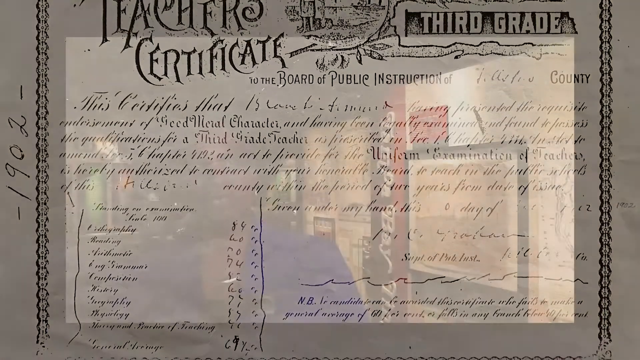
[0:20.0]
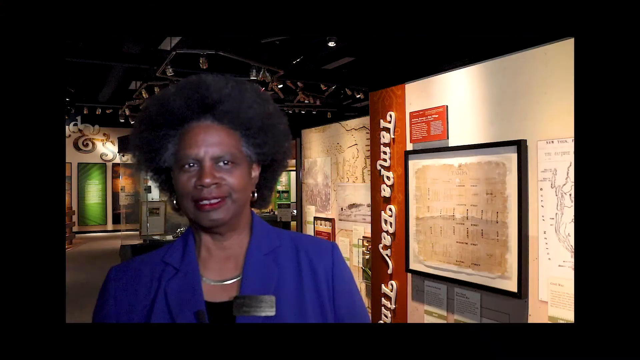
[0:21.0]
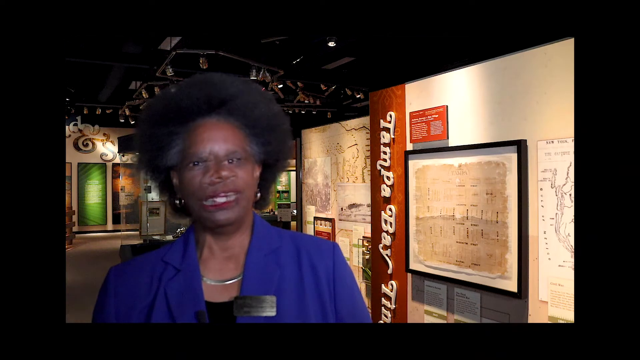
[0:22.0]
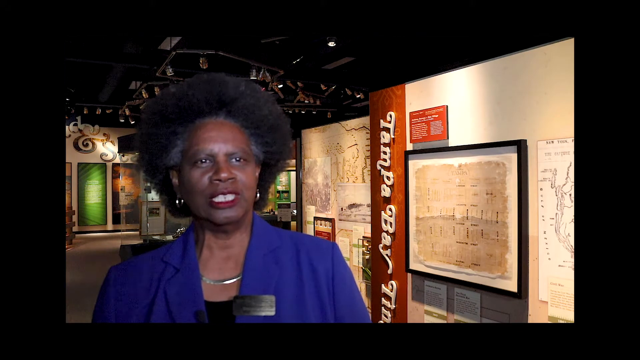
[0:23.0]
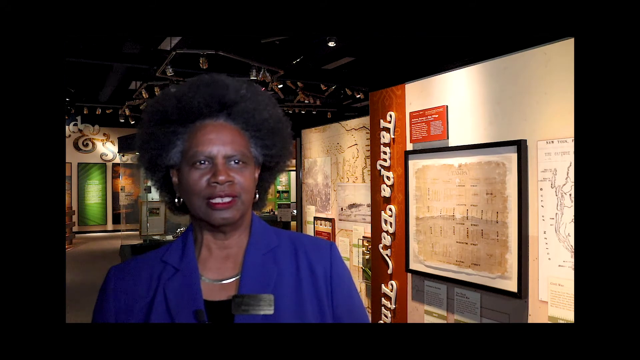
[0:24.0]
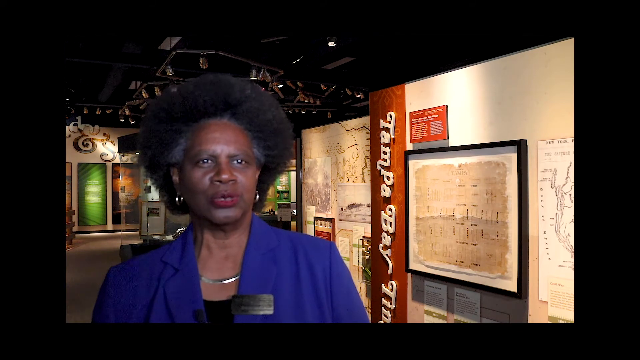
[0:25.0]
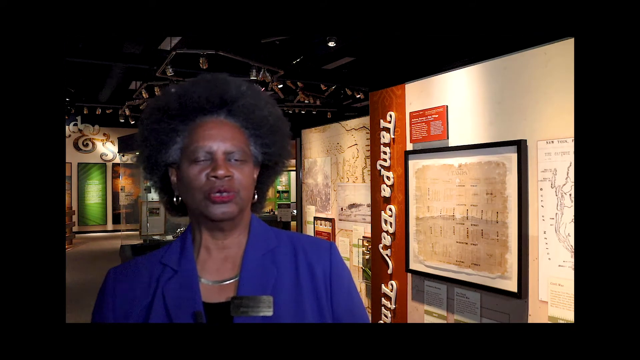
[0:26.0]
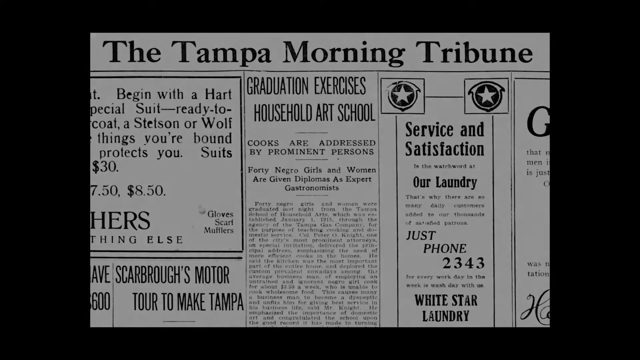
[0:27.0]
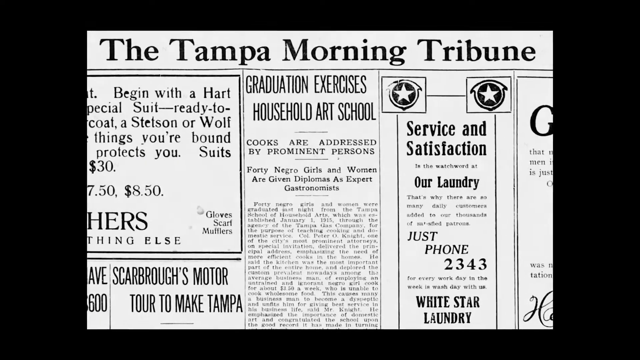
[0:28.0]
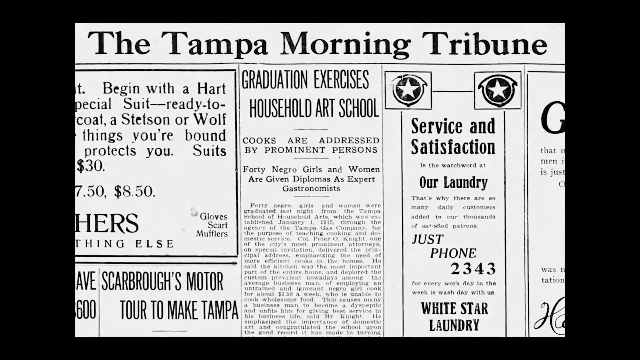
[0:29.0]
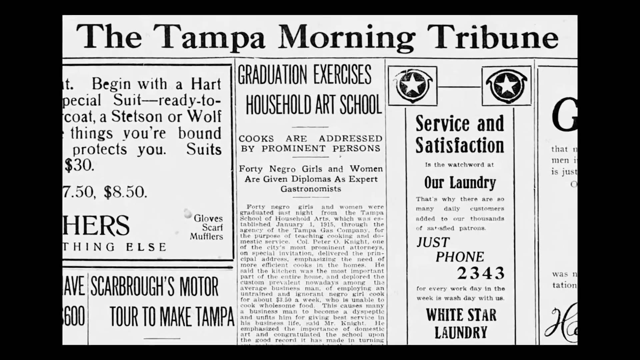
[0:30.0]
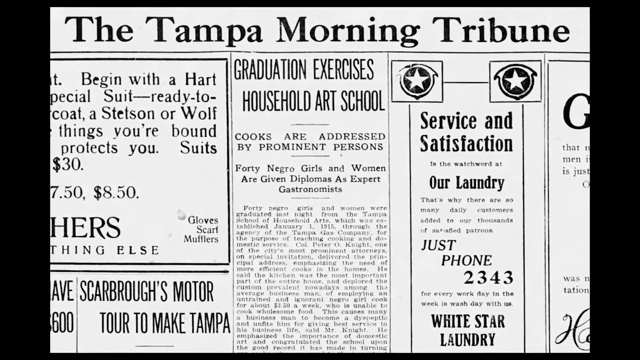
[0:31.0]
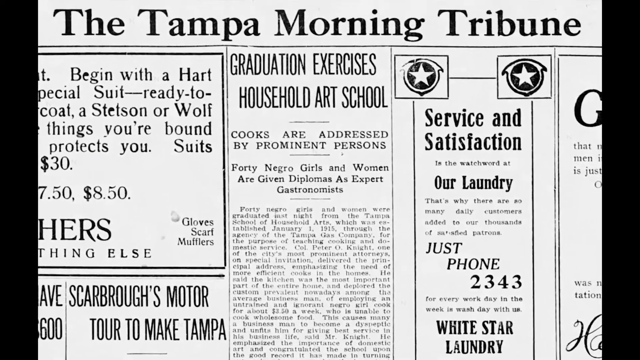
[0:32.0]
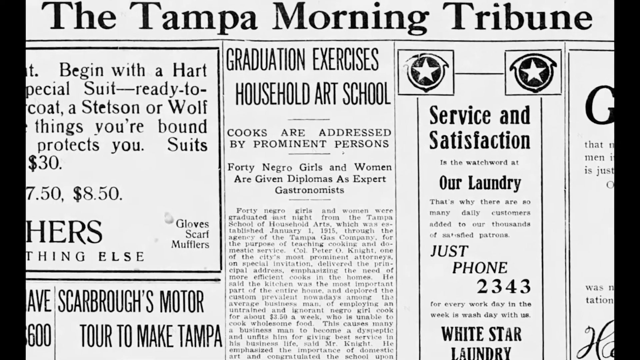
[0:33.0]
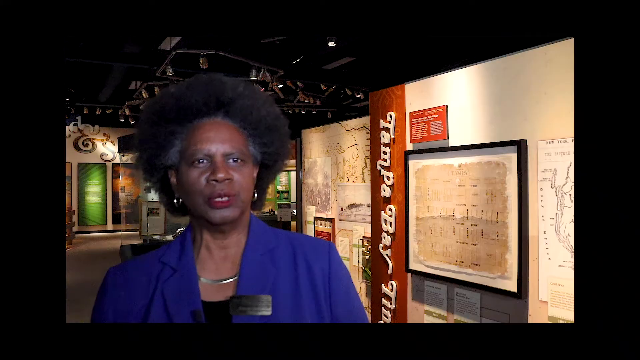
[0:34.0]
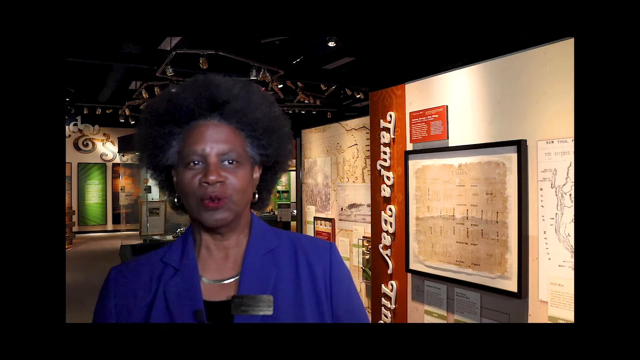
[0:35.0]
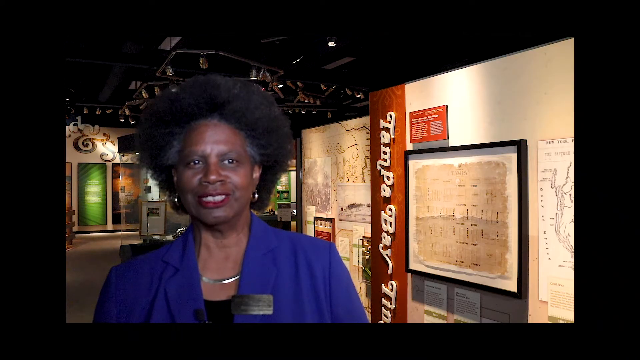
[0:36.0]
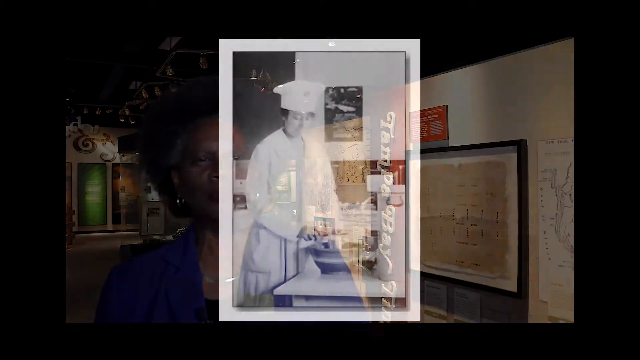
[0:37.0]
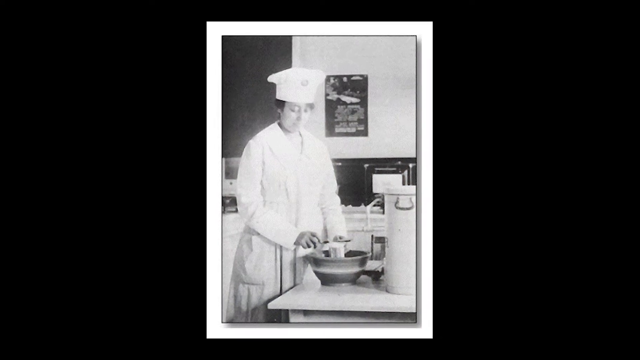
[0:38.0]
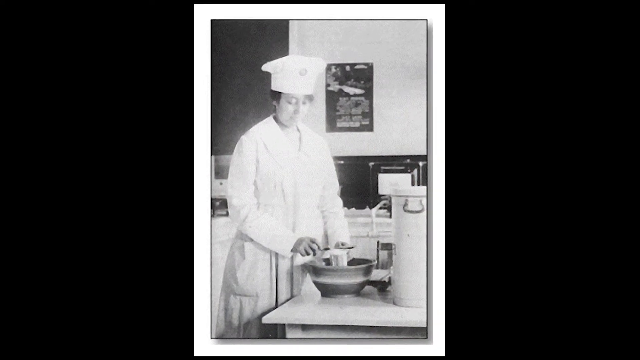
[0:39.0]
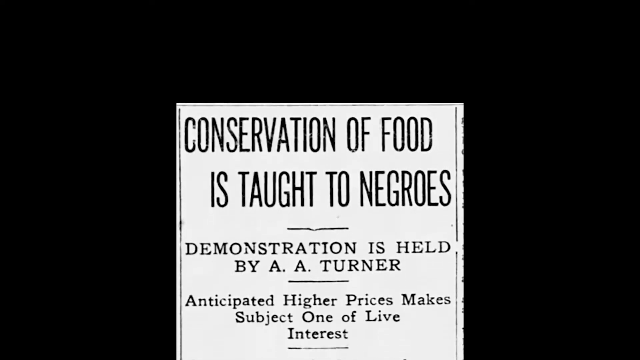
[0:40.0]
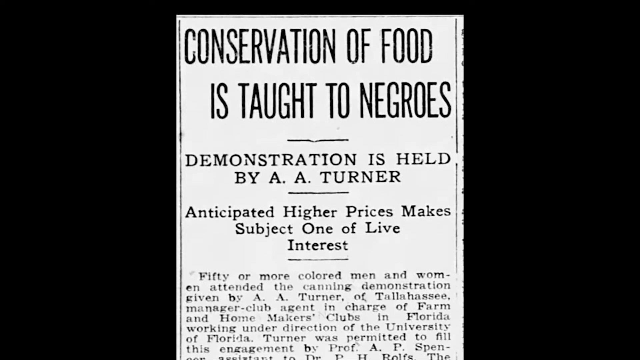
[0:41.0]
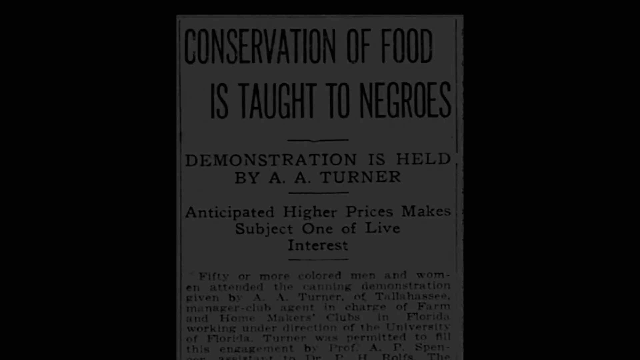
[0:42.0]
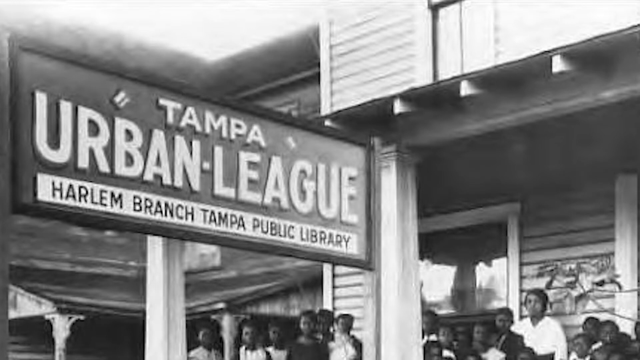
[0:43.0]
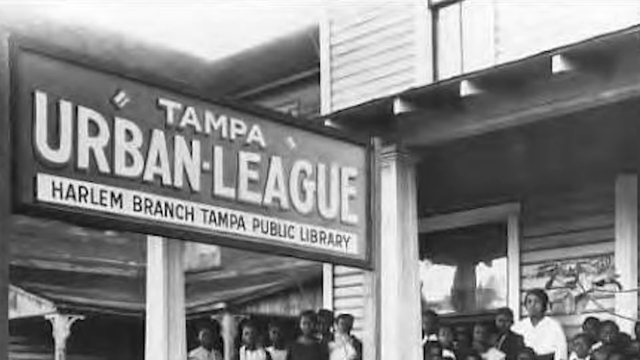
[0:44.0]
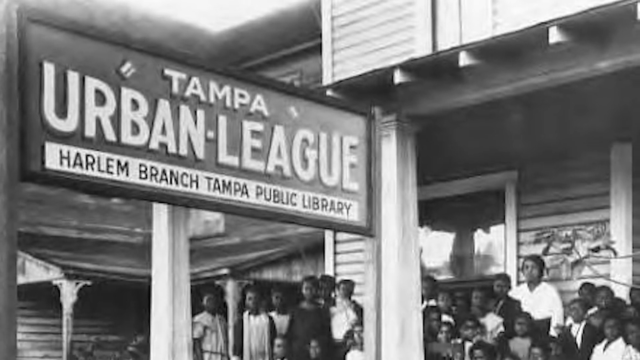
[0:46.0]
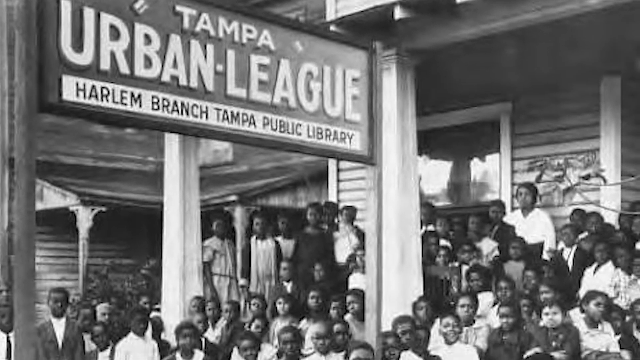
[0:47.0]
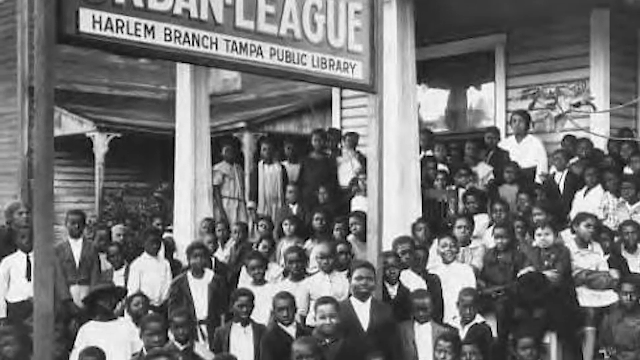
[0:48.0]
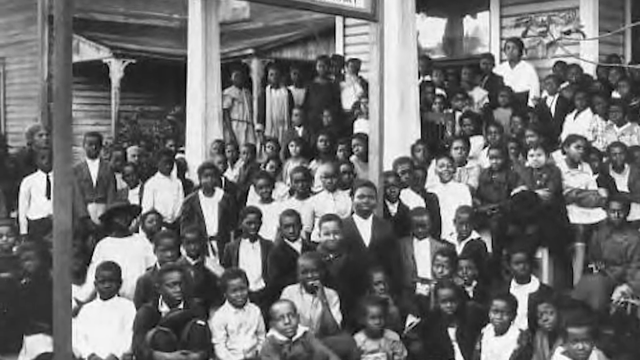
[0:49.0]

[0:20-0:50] A teacher's certificate is shown. It reads "this teacher certificate for the Board of Public Instruction certifies that Blanche Armwood"; only part of it can be made out, but it apparently allows Blanche Armwood to teach the third grade. Next comes the Tampa Morning Tribune, with what looks to be the cover showing "Graduation Exercises Household Art School," followed by "Forty Negro Girls and 40 Negro Women Are Given Diplomas As Expert Gastronomists." The woman is speaking again. A black-and-white image shows a woman in a white chef's hat and an apron who appears to be mixing something in a mixing bowl, and then a headline of an article reads "Conservation Of Food is Taught to Negroes." The Tampa Urban League, Harlem branch, Tampa Public Library is shown next, with lots and lots of little Black boys and girls sitting on its steps.